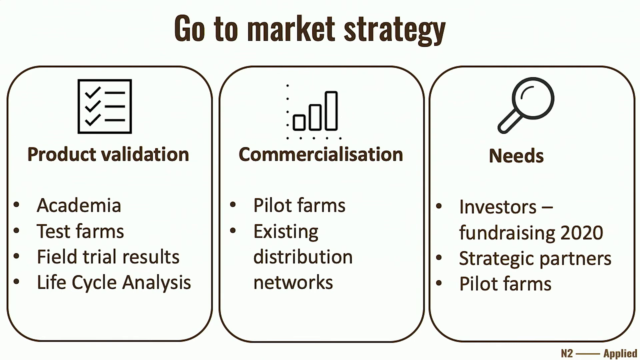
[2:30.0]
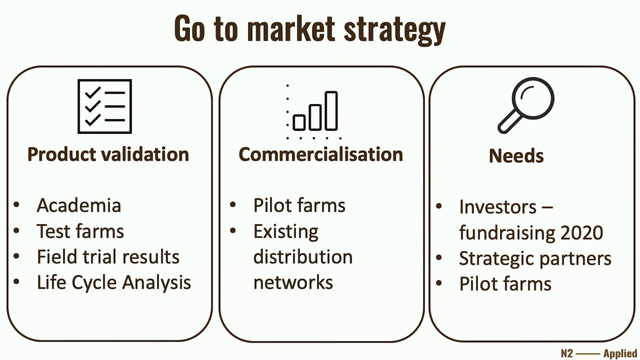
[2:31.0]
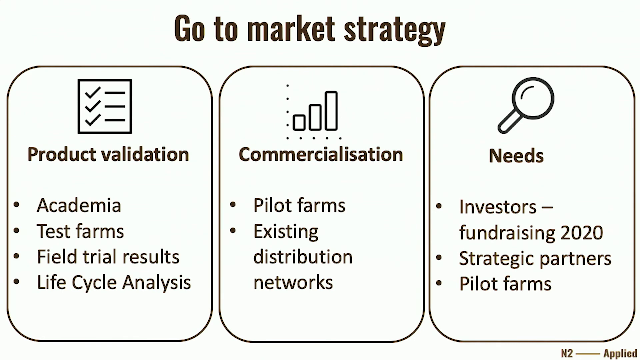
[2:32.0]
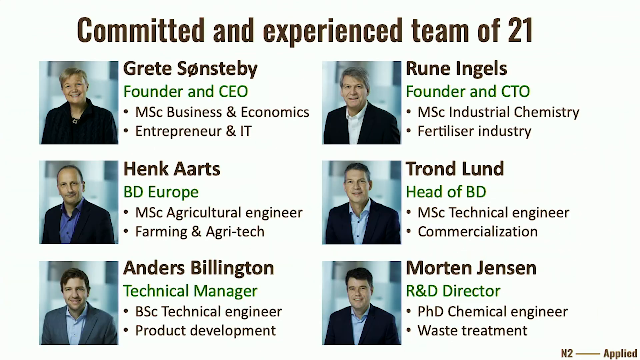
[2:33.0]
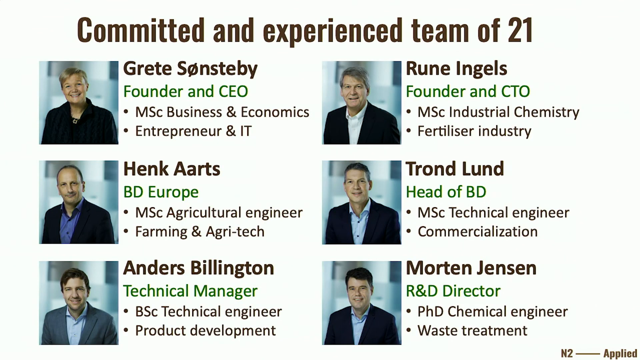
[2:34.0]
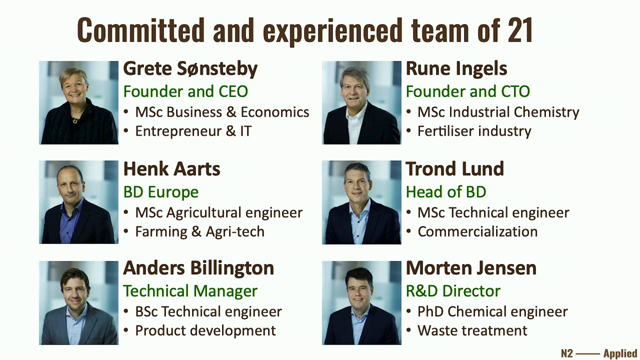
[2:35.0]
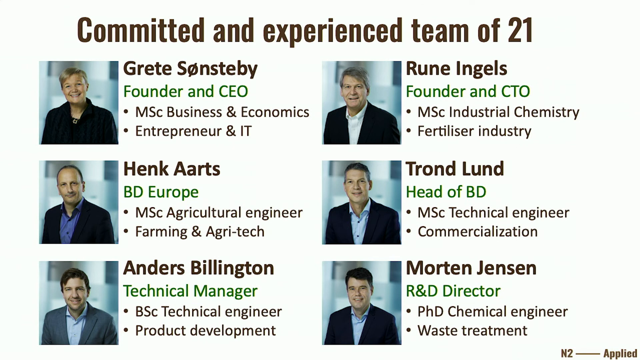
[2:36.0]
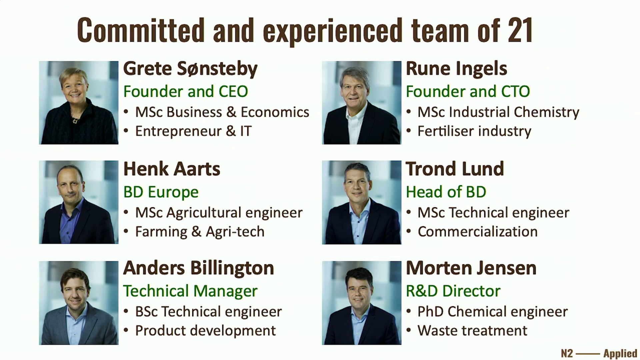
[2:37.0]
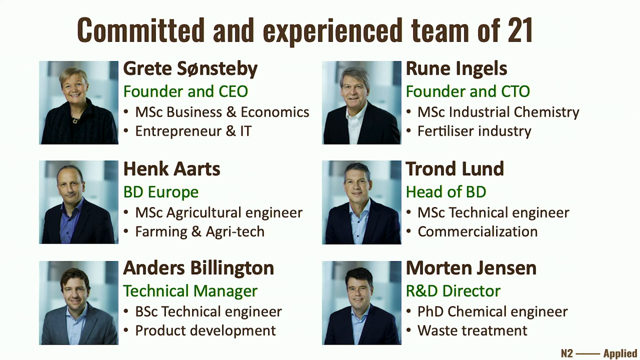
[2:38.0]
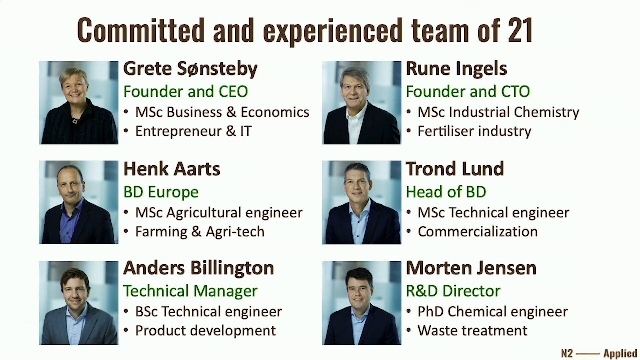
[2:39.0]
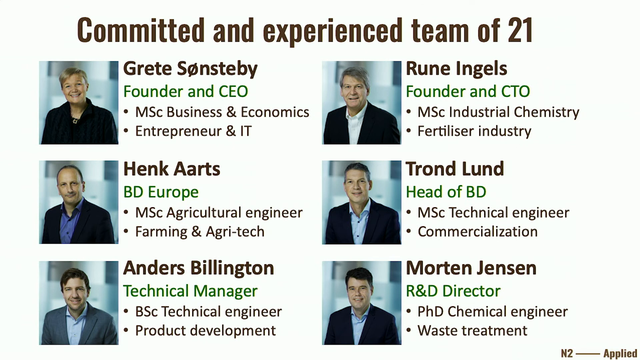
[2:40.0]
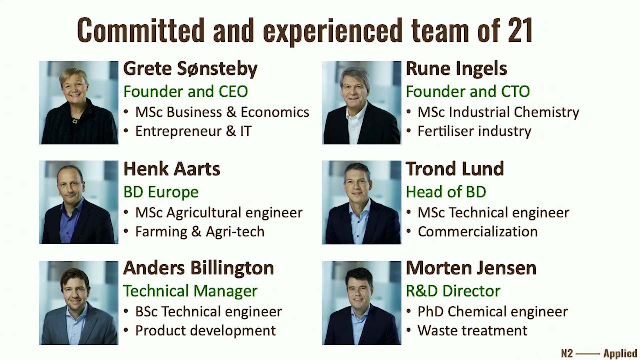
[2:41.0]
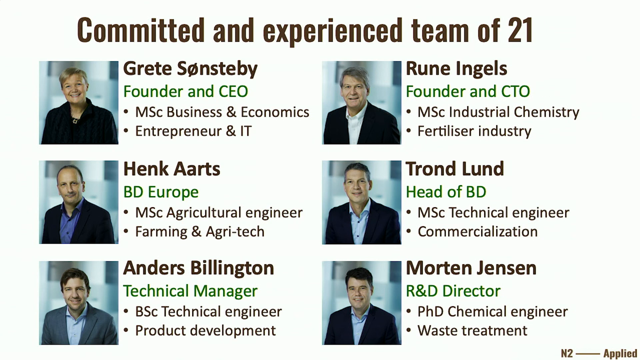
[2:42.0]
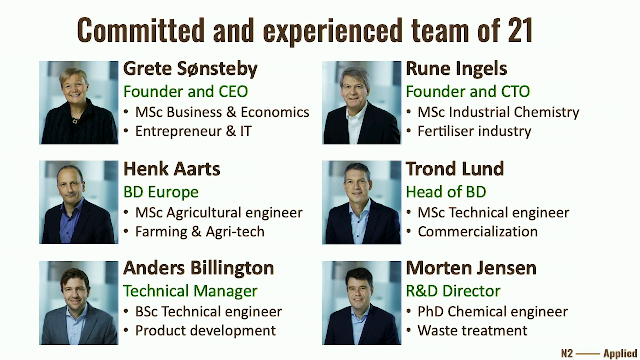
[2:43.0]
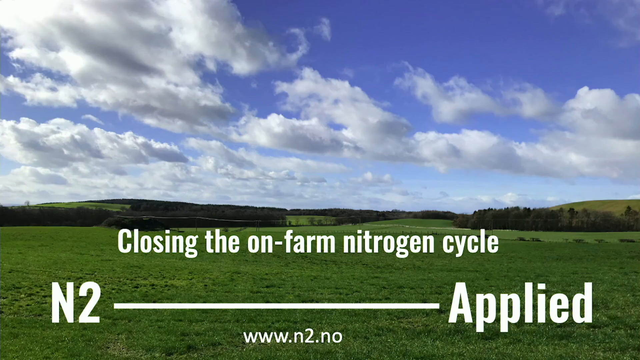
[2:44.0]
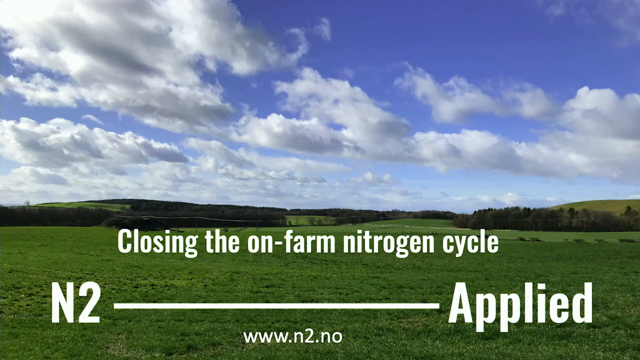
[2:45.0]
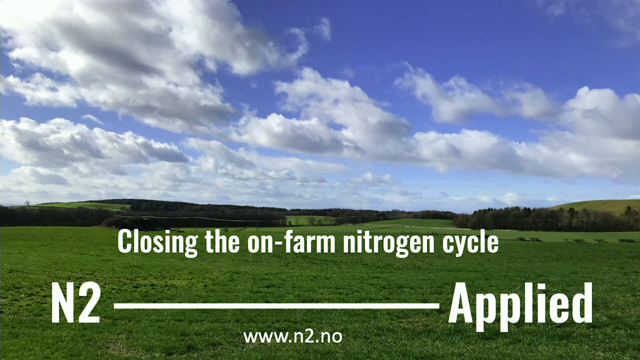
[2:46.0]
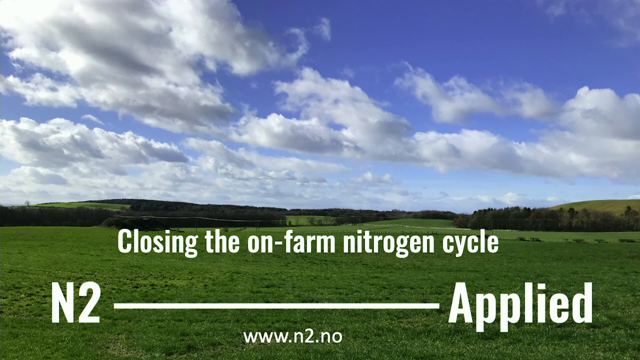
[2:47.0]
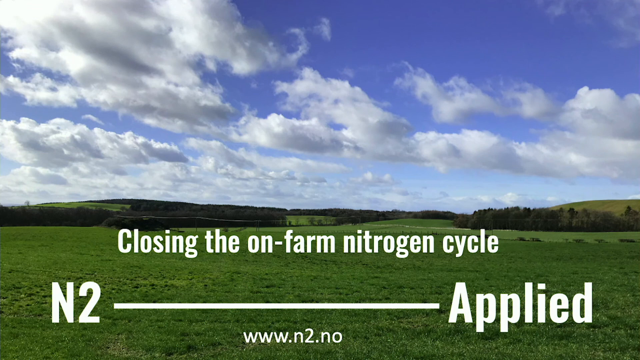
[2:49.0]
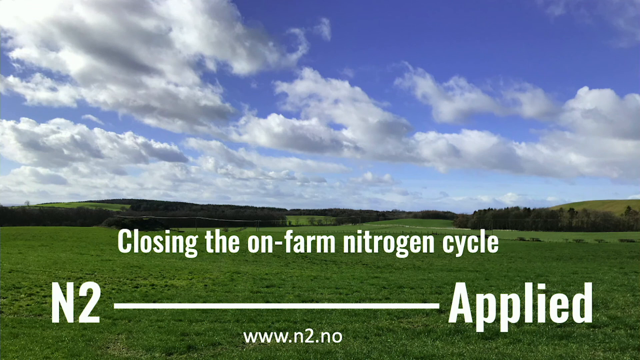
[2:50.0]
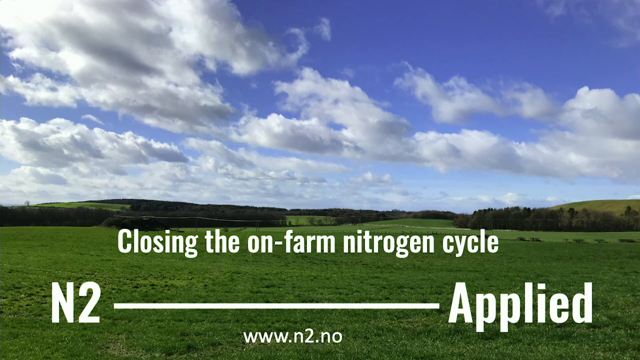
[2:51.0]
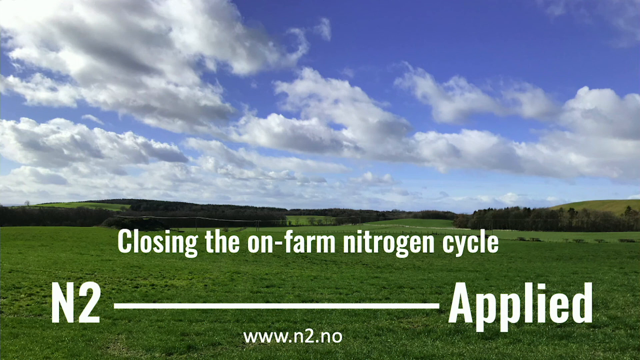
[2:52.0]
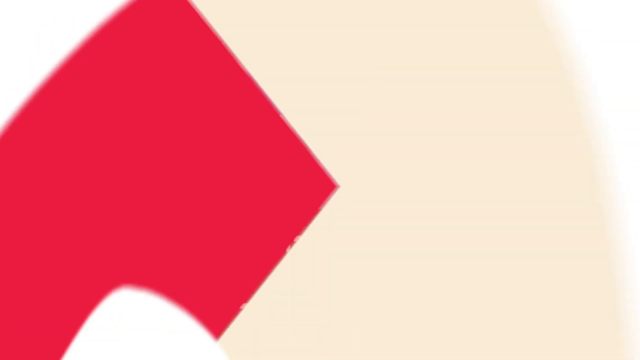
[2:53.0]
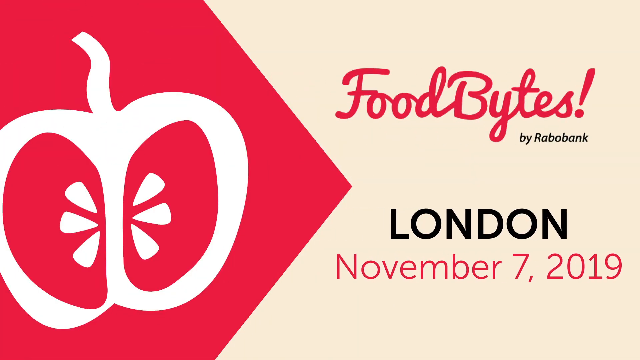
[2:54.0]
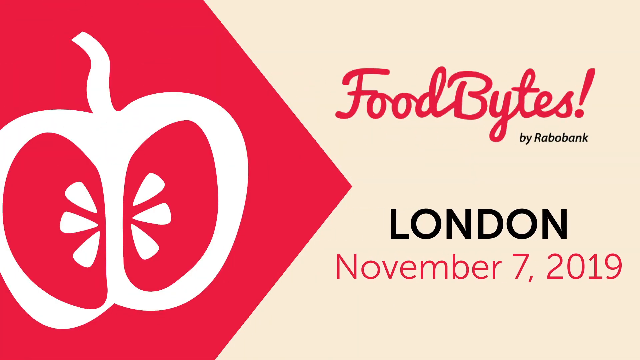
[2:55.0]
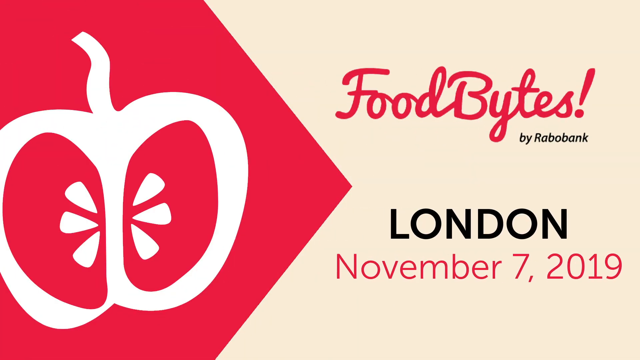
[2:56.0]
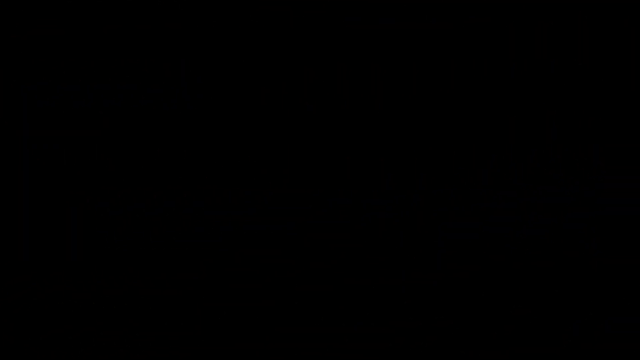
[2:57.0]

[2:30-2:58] A slide shows a team of people, with dark text reading "Founding group, committed and experienced team of 21". Below are various team members. In the upper left corner is Greta Sonsteby, a woman in a square color photo, with "MSC founder of business and economics, entrepreneur, and IT". Beneath her is Hank Arts, BD Europe, with bullet points "MSC agricultural engineer" and "farming and agri-tech". Beneath him is Anders Billington, technical manager. In the upper right corner is Rune Ingels, founder and CTEO, with bullet points "MSC Industrial Chemistry" and "Fertilizer Industry". Beneath Rune is Trond Lund, head of BD, "MSC Technical Engineer" and "Commercialization". Beneath that is Morten Jensen, R&D Director, "Ph.D. Chemical Engineer". The scene then switches to an outdoor view of a rolling green field with white clouds and bright blue skies. White text in the center reads "Closing the On-Farm Nitrogen Circle". In the lower left corner is a bold white "N2", in the lower right corner the word "Applied", and in the bottom center "www.n2o.no". The video closes with a white Apple logo sliding in, with red text on the left and right reading "Food Bytes by Robo Bank", and beneath that, in black text, "London, November 7, 2019".